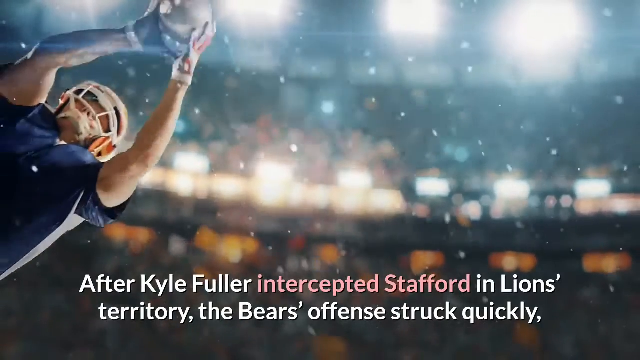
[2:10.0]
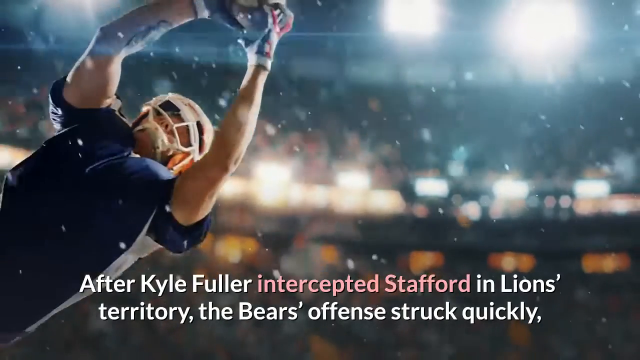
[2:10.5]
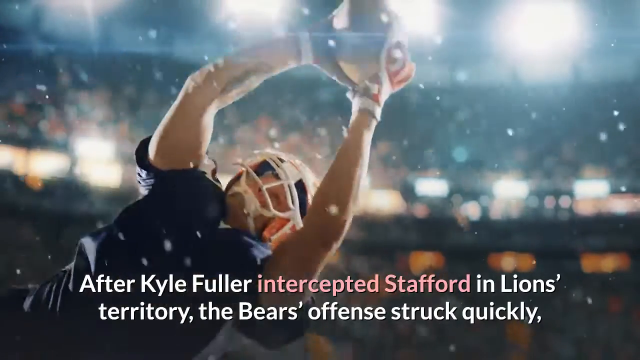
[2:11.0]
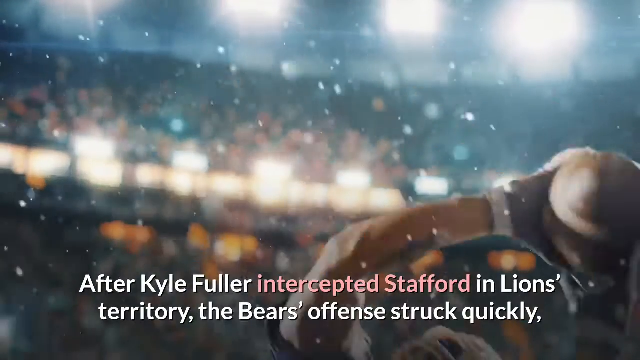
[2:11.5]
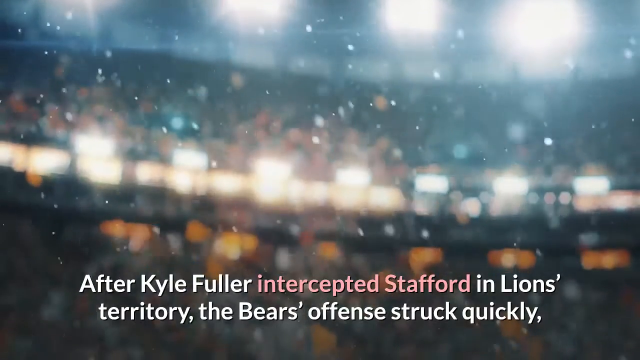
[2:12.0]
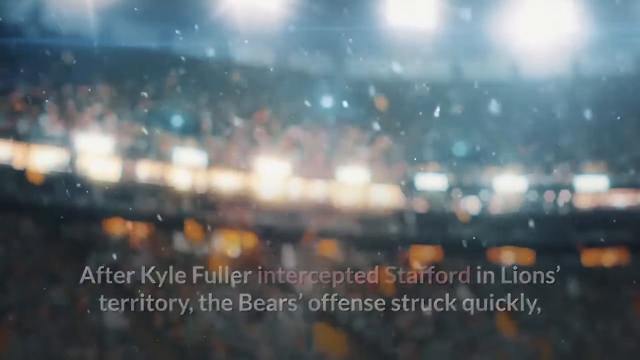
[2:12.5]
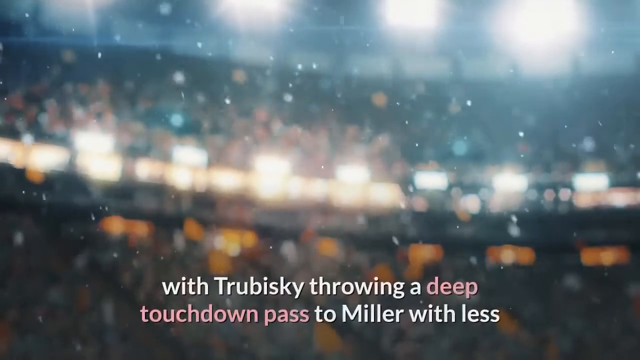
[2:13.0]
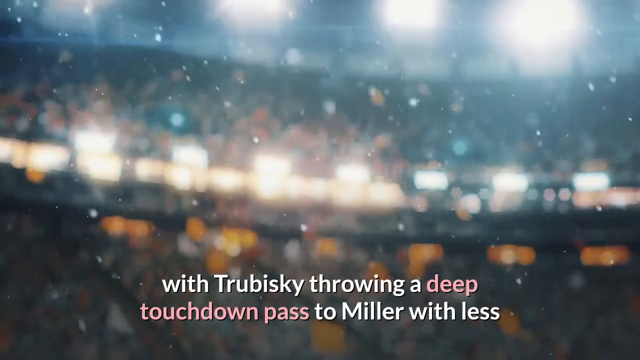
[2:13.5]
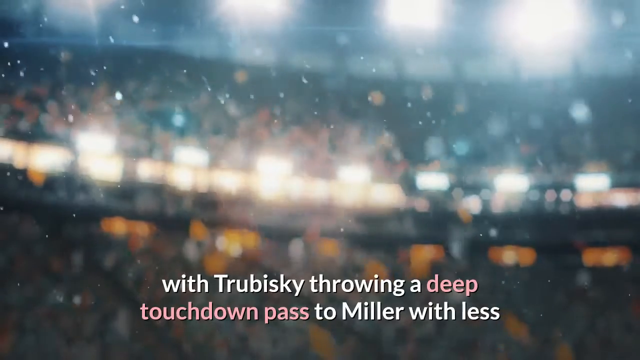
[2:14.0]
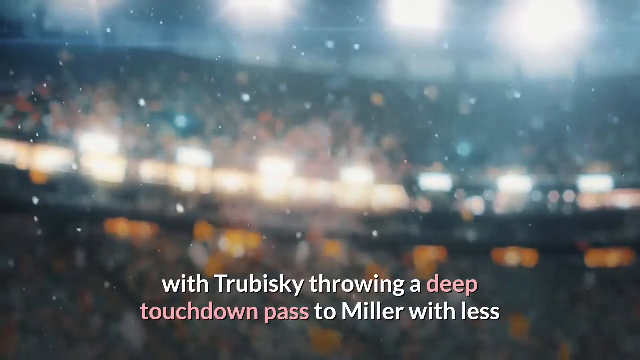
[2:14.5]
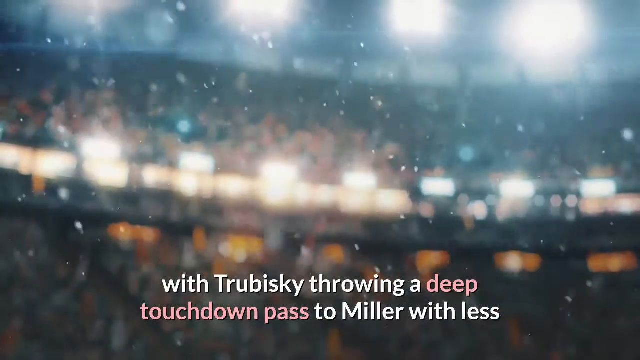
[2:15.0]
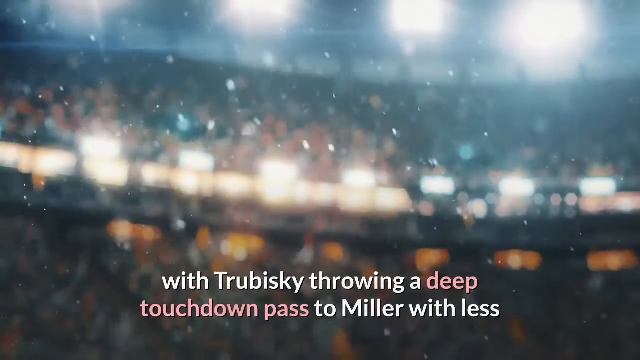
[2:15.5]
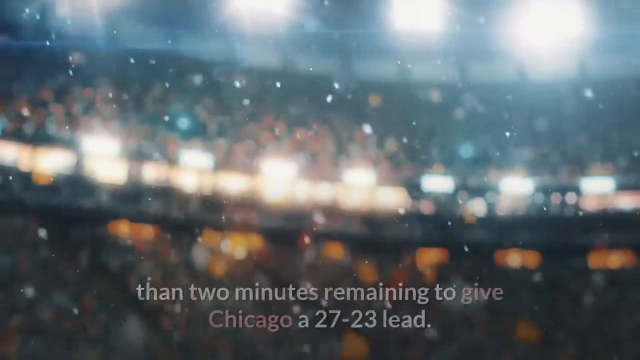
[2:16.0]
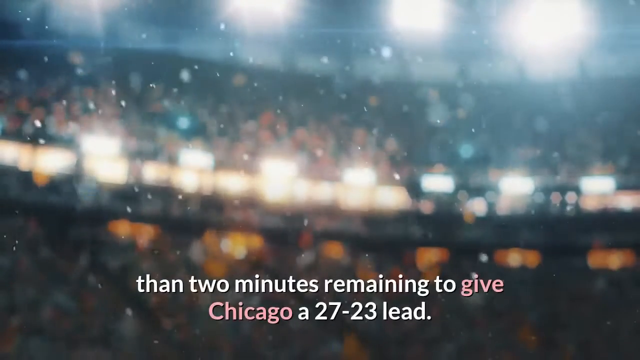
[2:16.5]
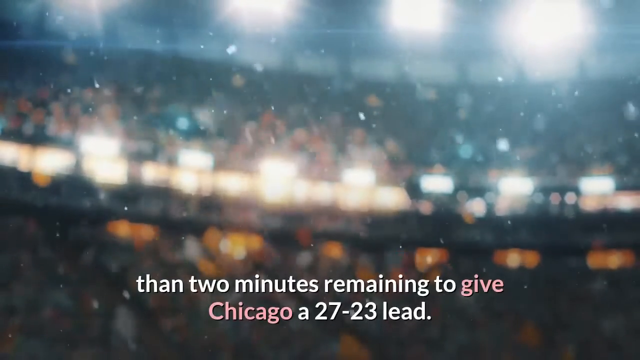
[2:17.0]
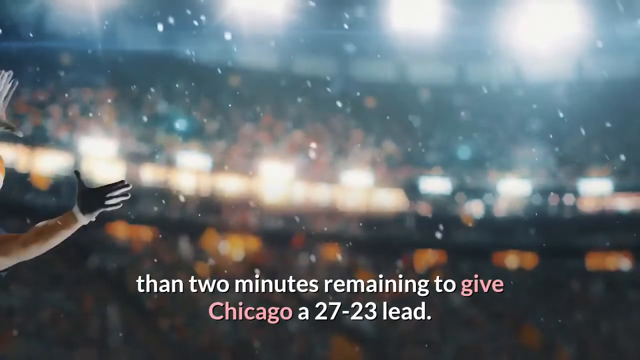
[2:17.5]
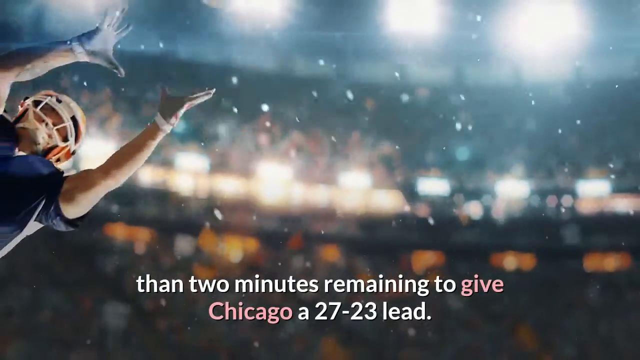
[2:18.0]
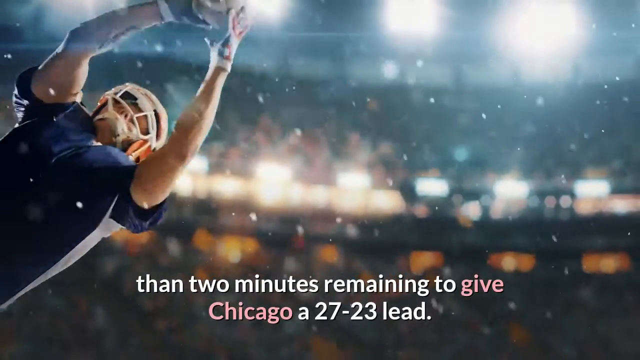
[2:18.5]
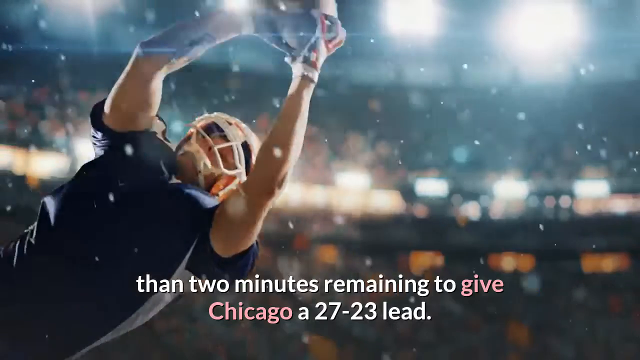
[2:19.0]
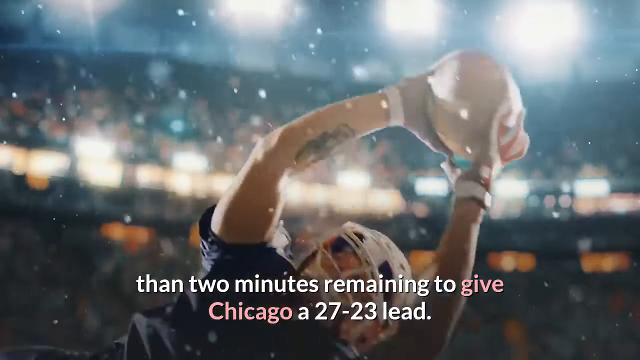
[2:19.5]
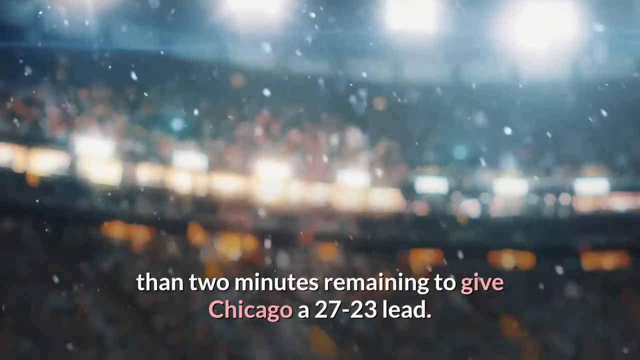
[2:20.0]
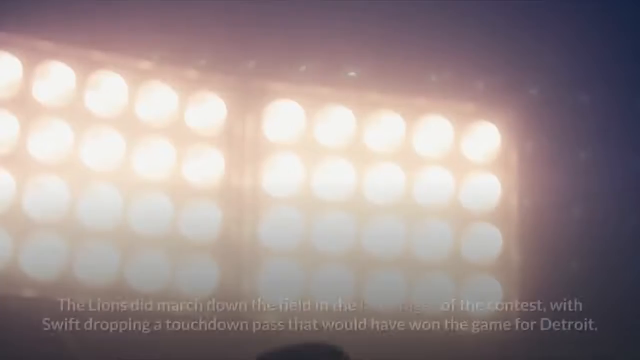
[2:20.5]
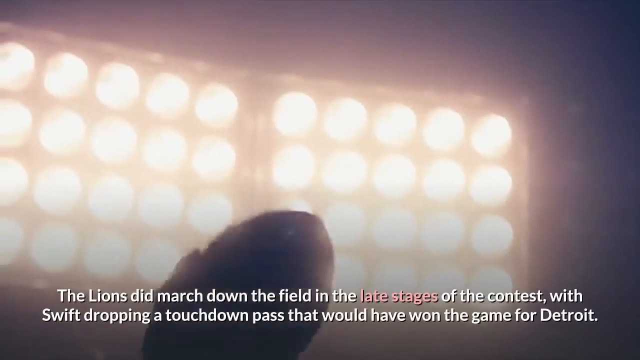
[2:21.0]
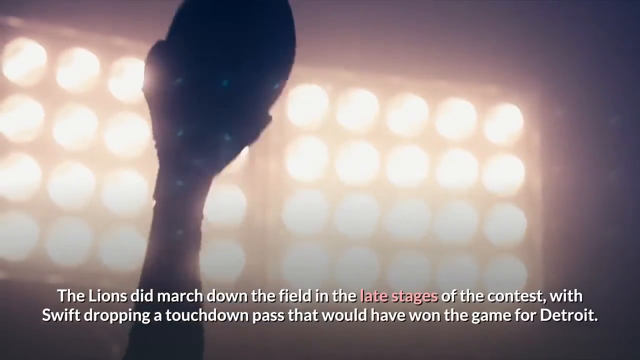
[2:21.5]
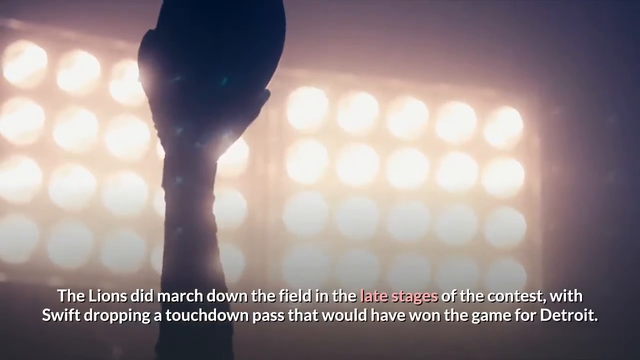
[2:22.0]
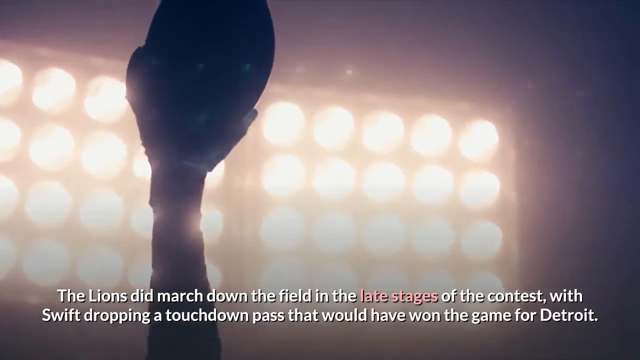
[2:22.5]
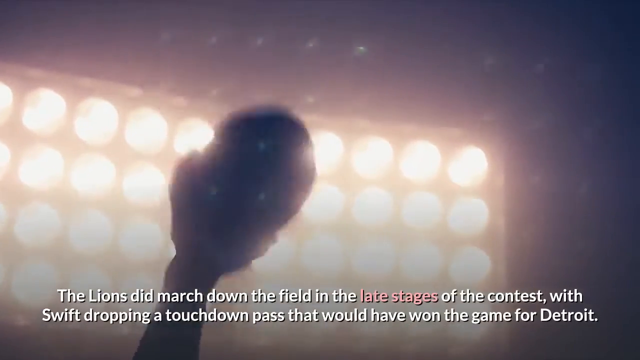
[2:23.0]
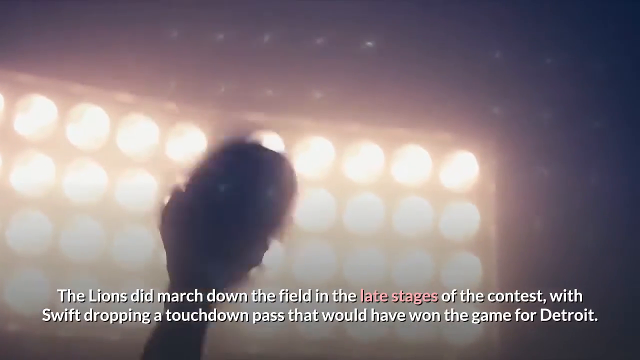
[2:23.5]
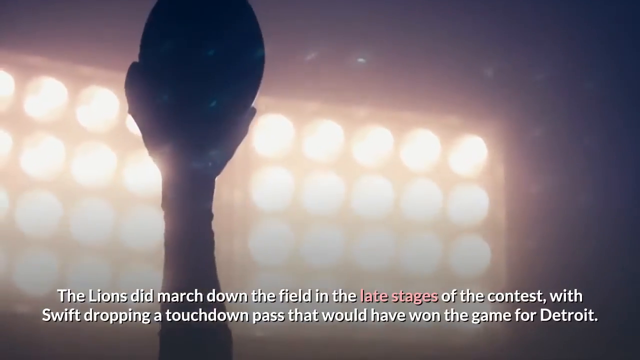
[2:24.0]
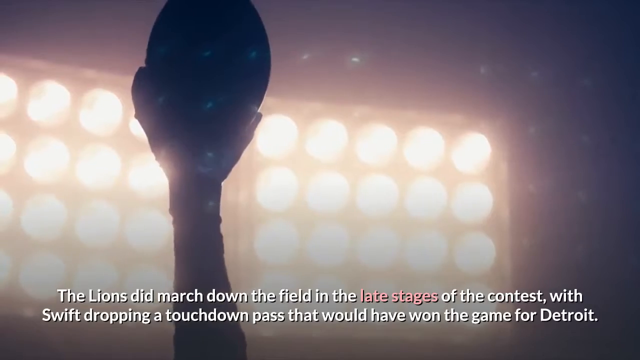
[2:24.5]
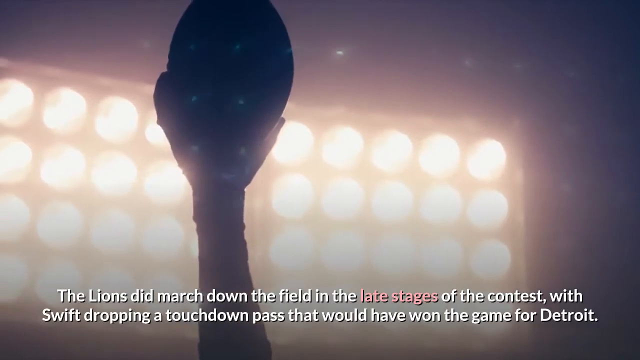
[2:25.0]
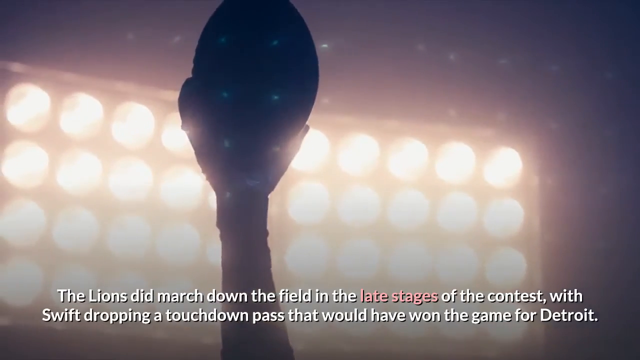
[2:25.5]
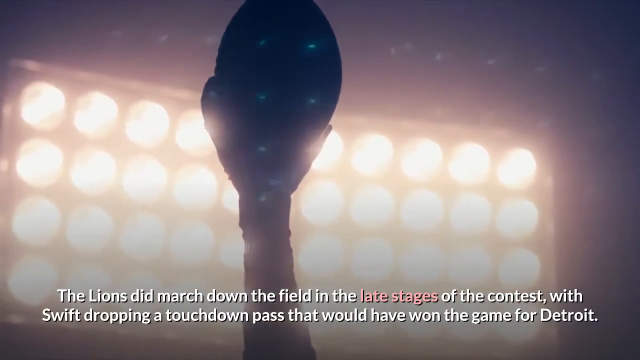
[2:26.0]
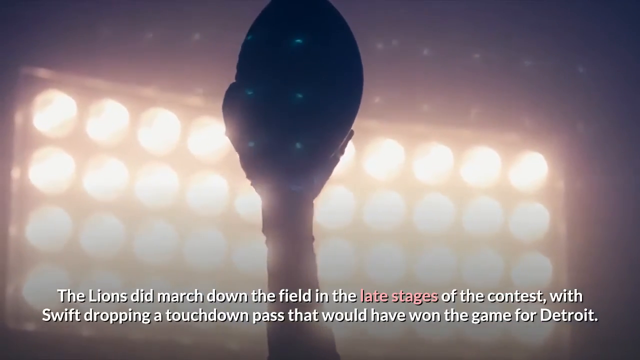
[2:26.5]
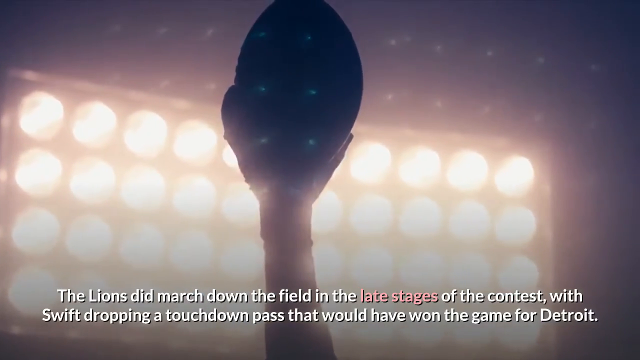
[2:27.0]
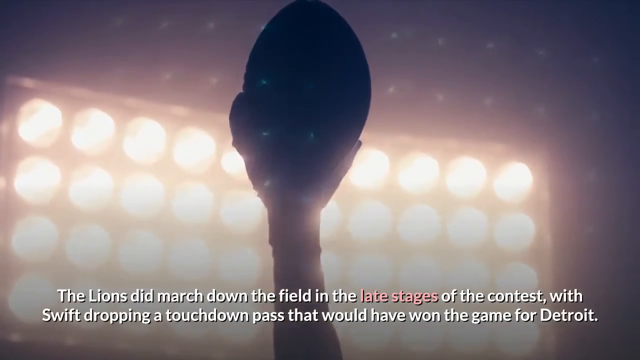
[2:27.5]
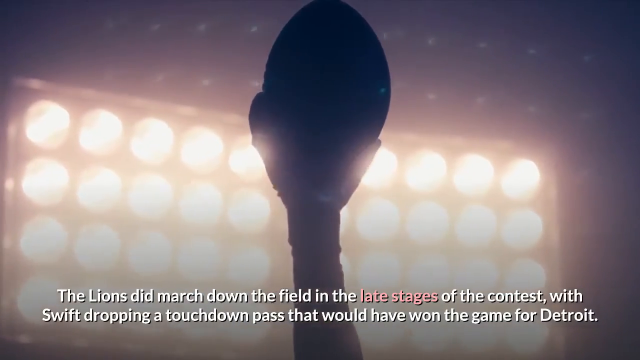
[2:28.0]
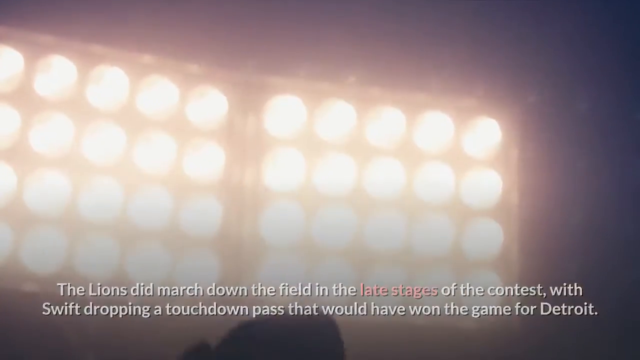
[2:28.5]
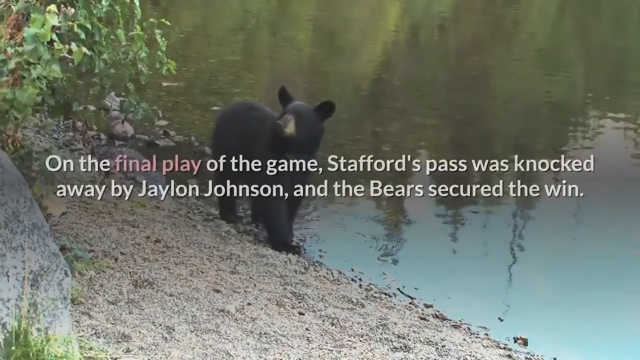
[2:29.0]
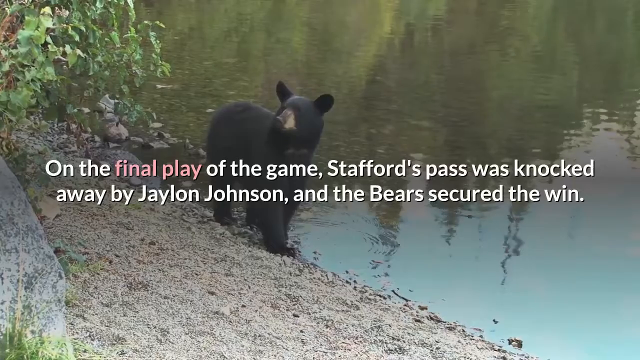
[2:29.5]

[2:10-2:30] As the man catches the ball, text at the bottom mentions that "Kyle Fuller intercepted Stafford in Lions territory," with Trubisky throwing a deep touchdown pass with less than two minutes remaining. The next frame shows what looks like a lot of lights placed next to each other. Then a silhouette of a hand holding balls is raised up, pulled down, and raised again. Text at the bottom of the screen mentions the Lions marching down the field "in the last stages of the contest, with Swift dropping a touchdown pass that would have won the game for Detroit." The next frame shows the bear, which seemingly looks to eat and then runs away.